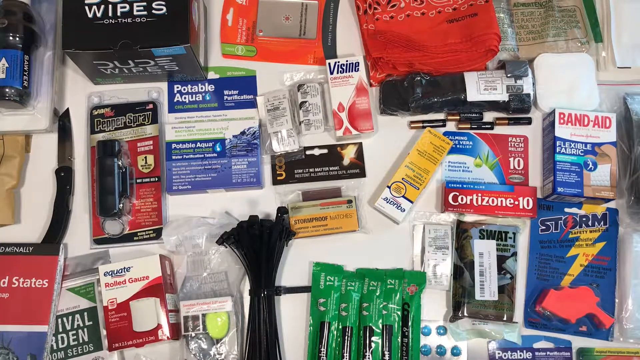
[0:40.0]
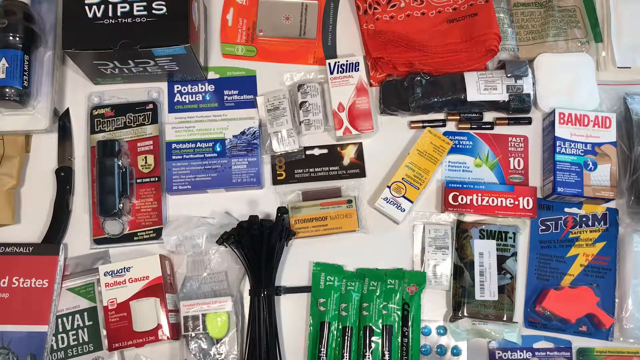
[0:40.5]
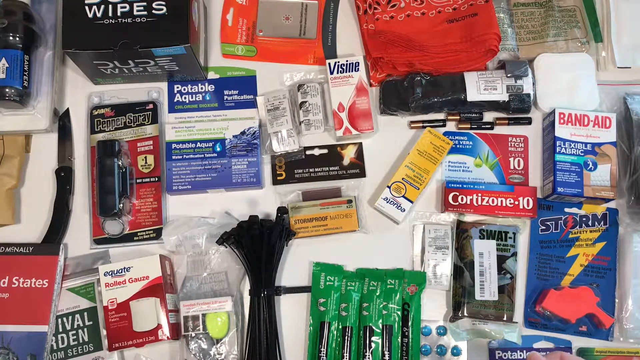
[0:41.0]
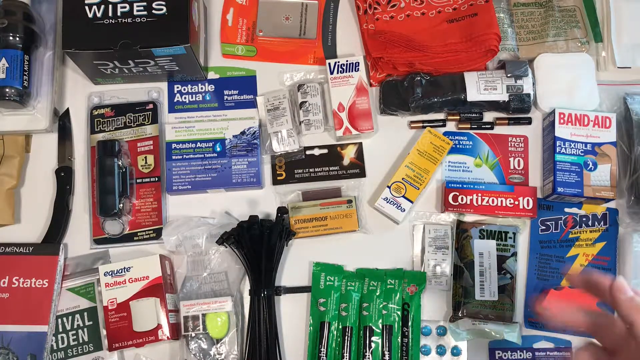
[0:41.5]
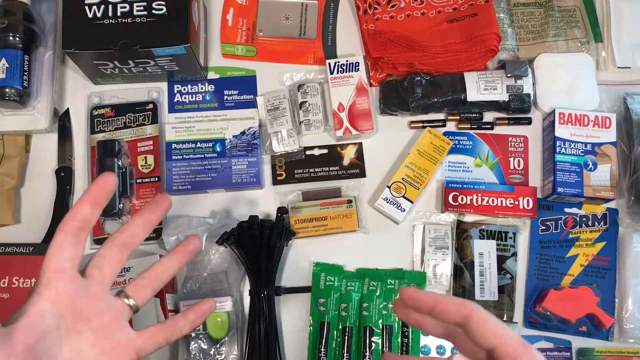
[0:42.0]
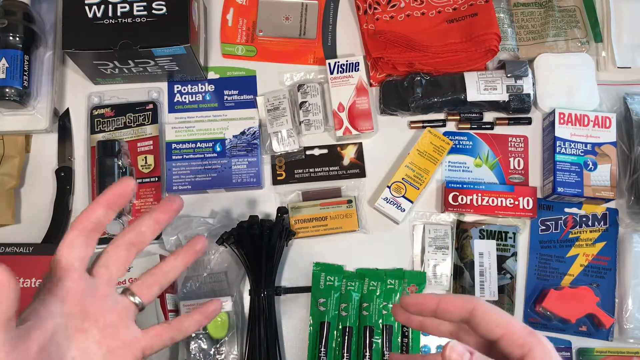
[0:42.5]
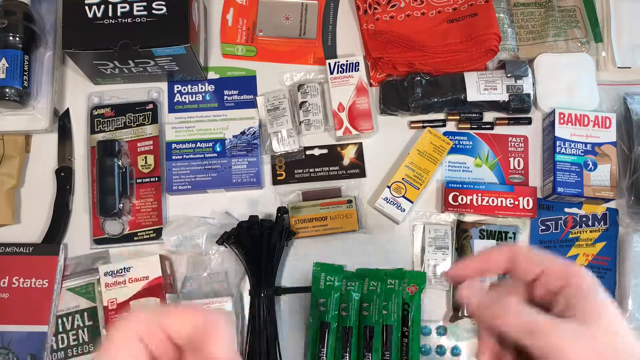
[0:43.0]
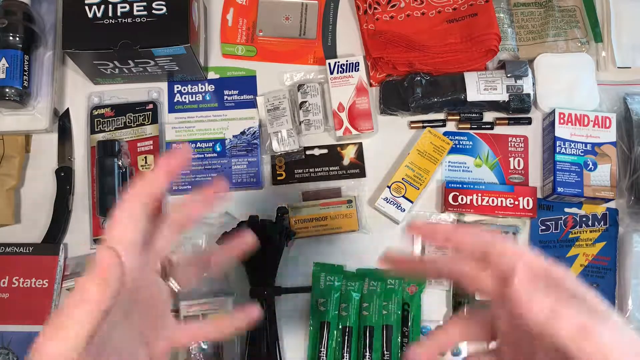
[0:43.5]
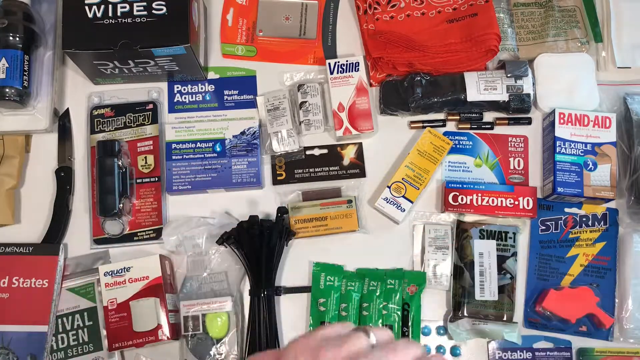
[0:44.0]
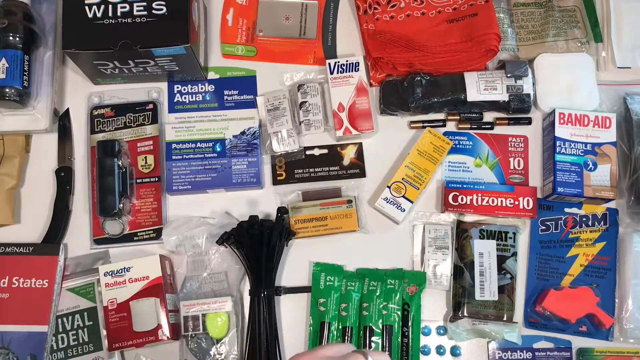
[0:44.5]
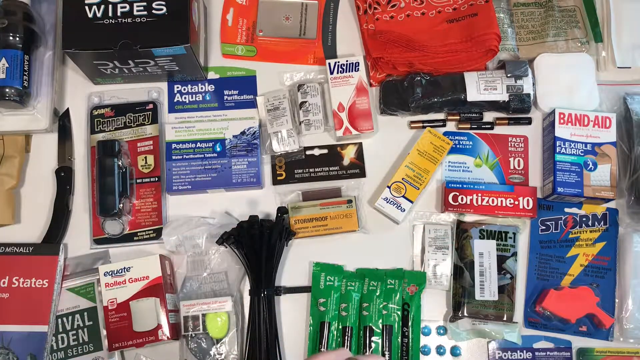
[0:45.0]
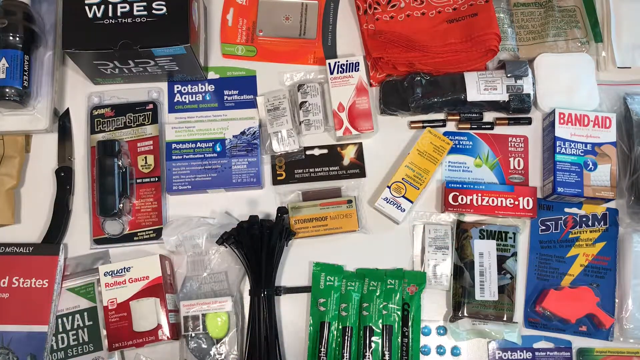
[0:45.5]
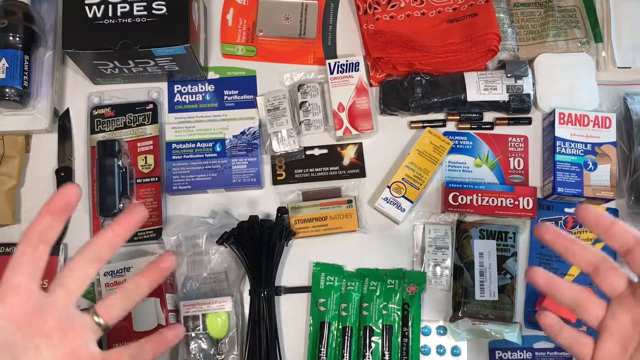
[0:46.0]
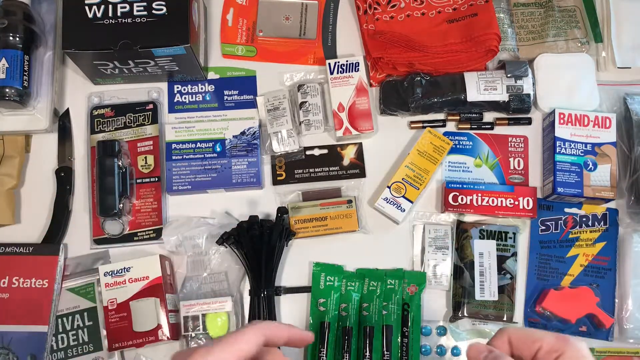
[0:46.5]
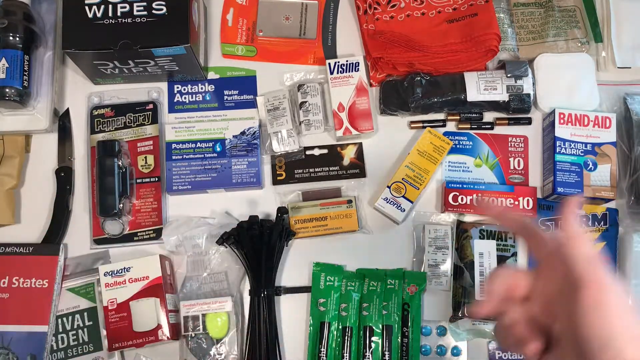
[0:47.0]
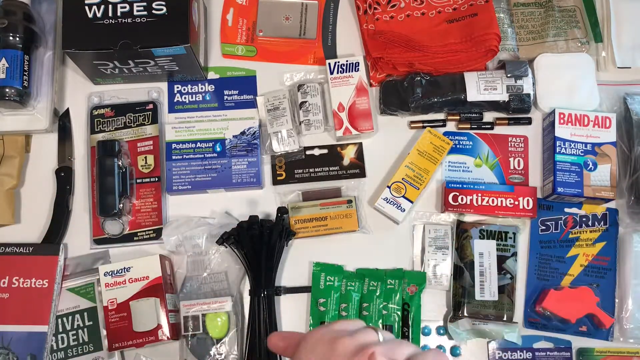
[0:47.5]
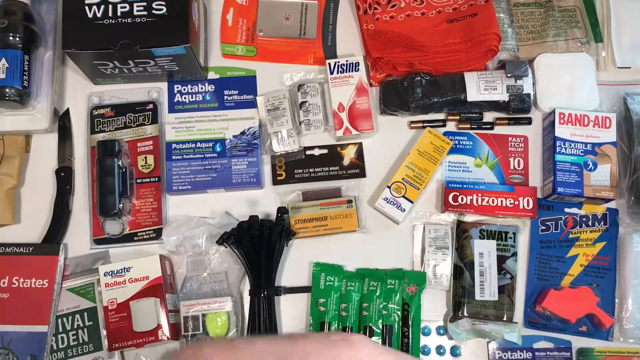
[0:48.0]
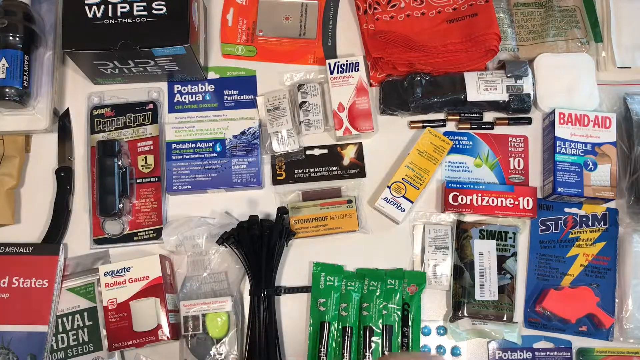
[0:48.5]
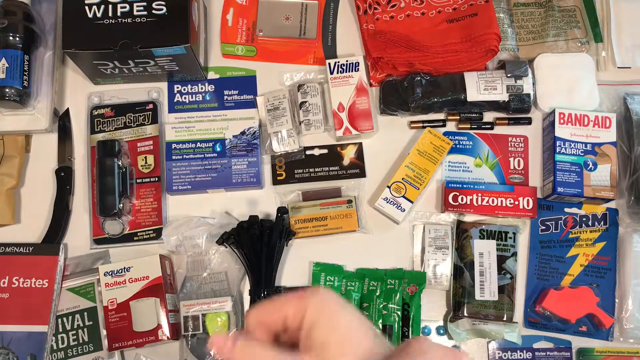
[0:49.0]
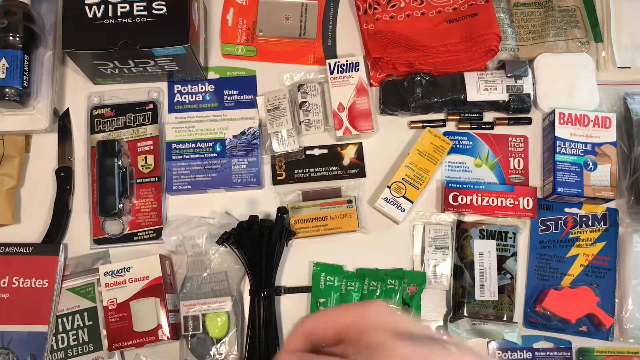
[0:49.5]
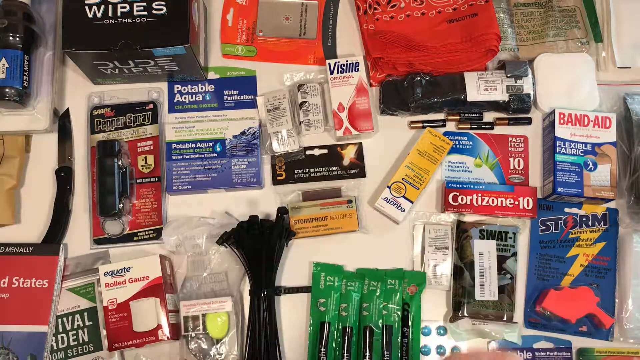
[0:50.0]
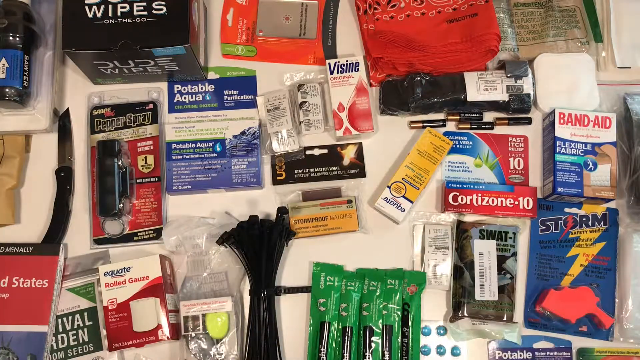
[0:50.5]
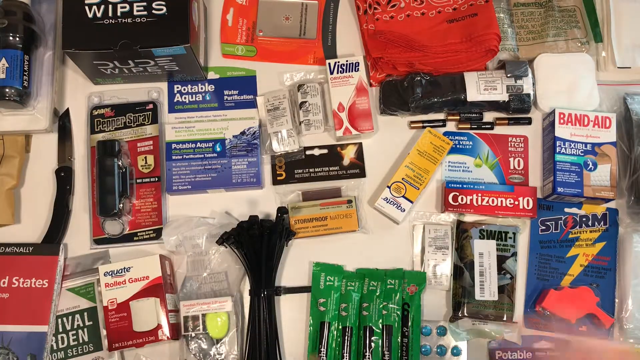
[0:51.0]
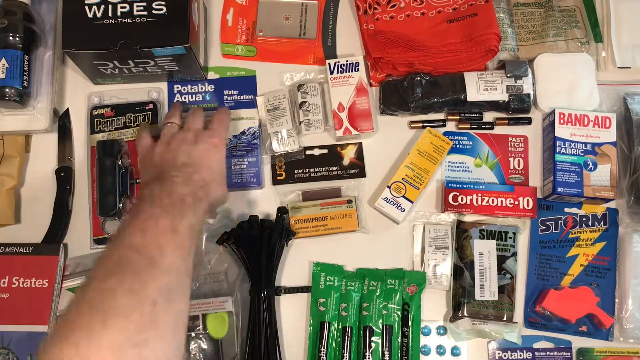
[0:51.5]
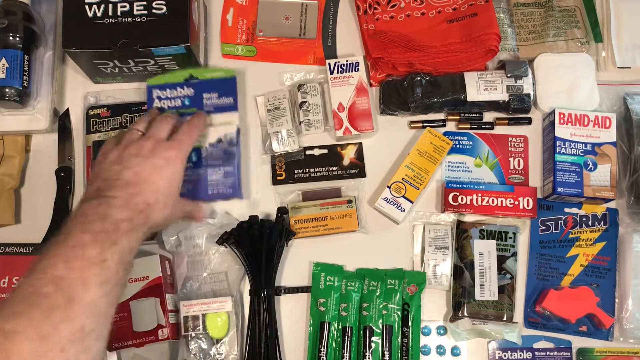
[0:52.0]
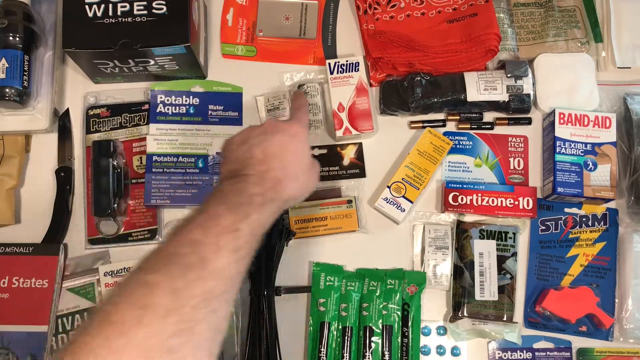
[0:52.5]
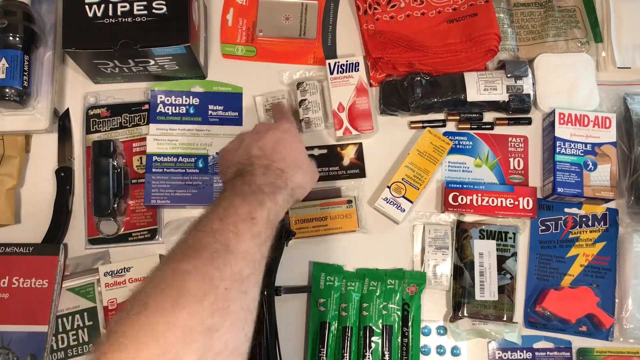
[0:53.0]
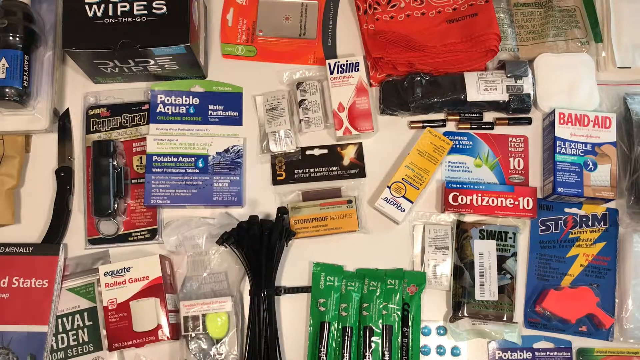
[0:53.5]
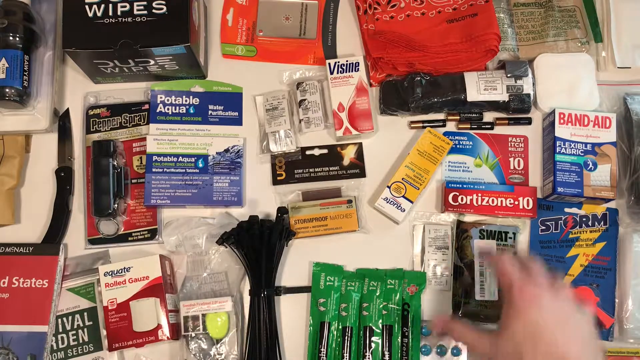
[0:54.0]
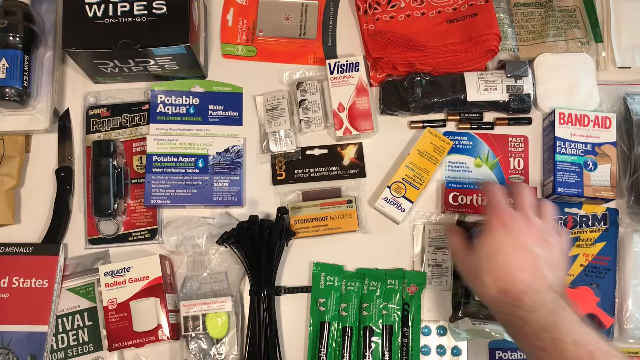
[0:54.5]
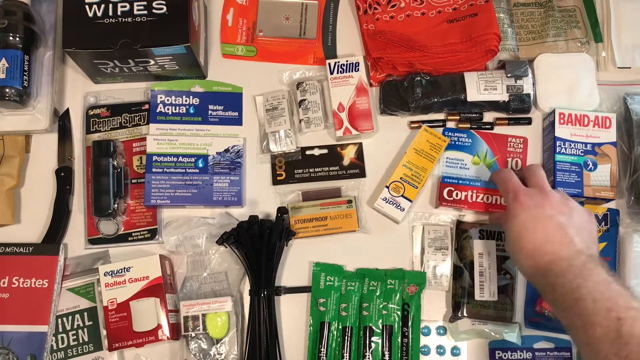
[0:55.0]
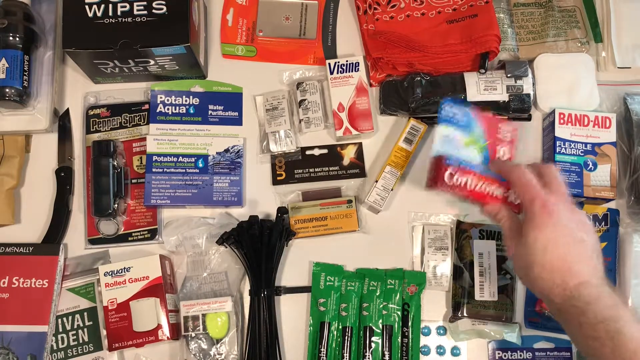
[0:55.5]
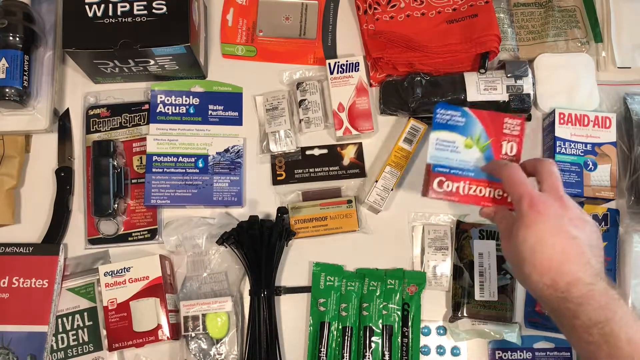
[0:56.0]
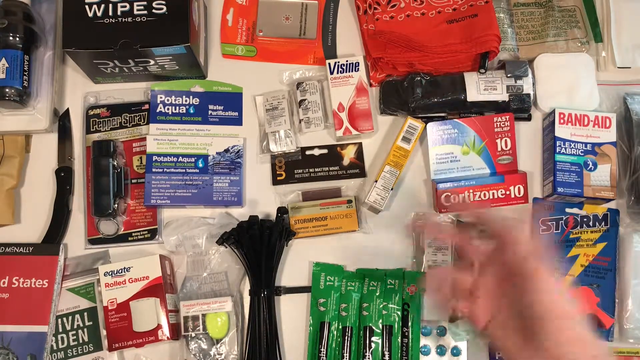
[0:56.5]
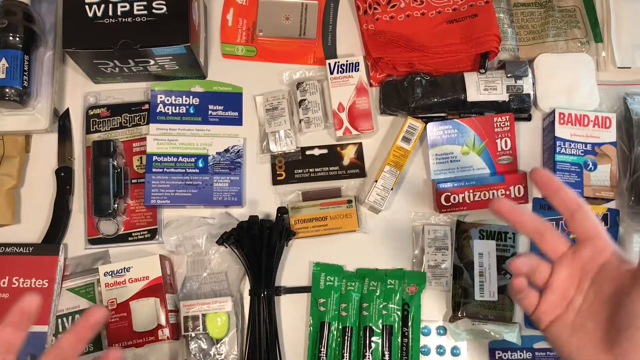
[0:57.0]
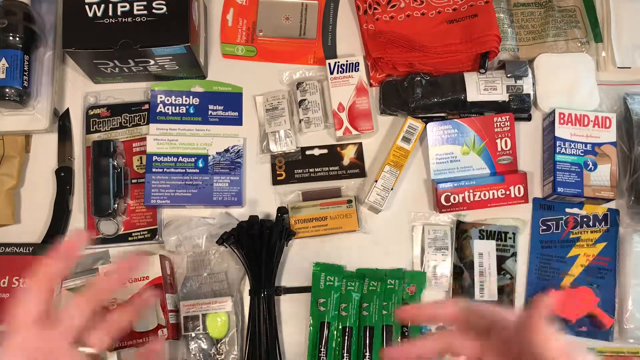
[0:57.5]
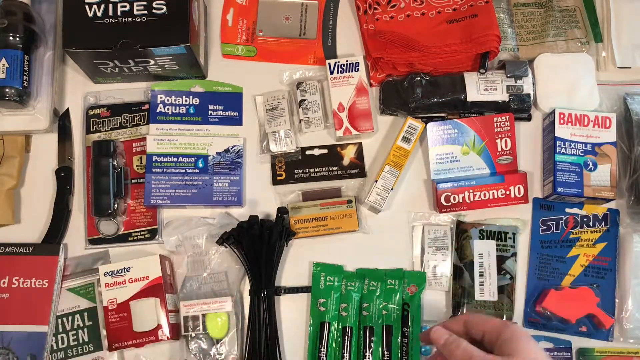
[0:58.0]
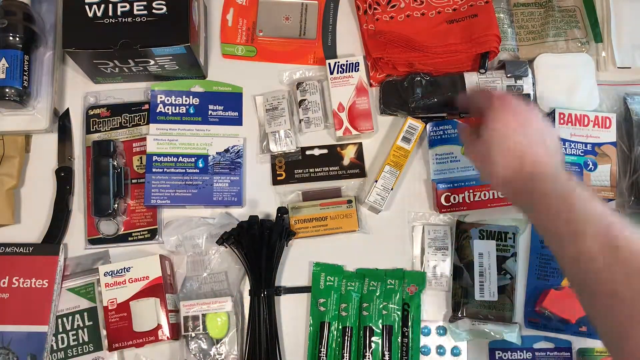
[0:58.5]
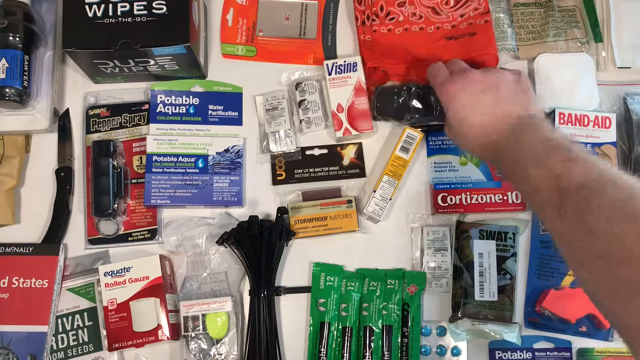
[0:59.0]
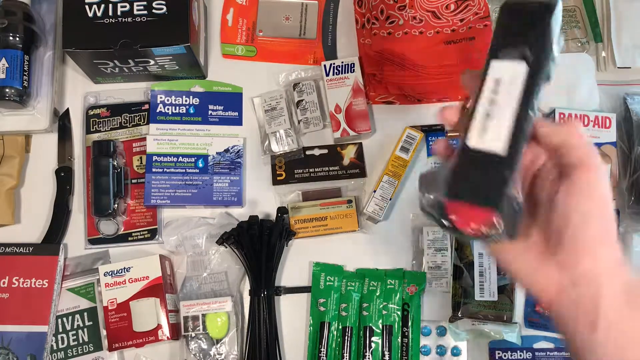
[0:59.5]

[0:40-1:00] Health care products fill the screen entirely, lying on a white table. They include wipes, Visine eye drops, Band-Aid flexible fabric bandages, a product called Storm, a product called Swat, what looks to be latex gloves, Equate rolled gauze, a Rand McNally United States map, pepper spray, potable aqua, and various other health care products, all in their original packaging. A pair of Caucasian hands keeps bouncing up and down from the bottom of the screen, apparently pointing out different products at different times, picking them up and showing them to the camera. The shot ends on a still view of all the various health care products.